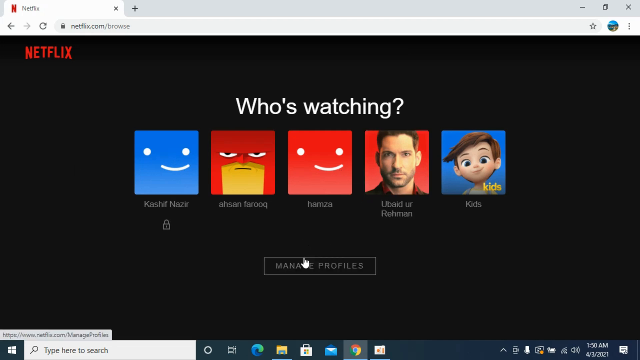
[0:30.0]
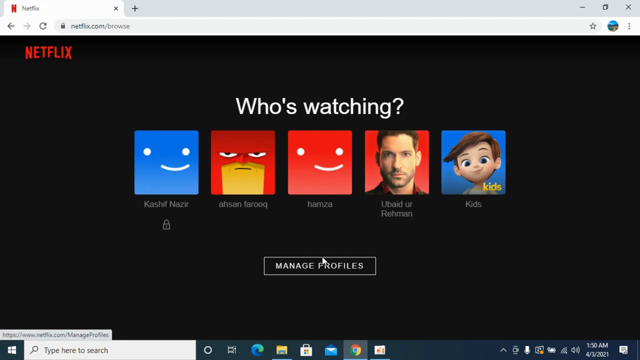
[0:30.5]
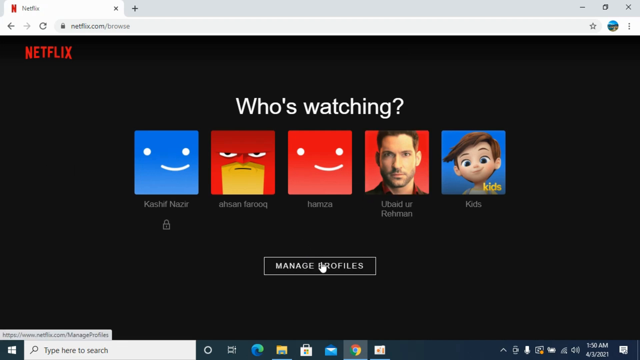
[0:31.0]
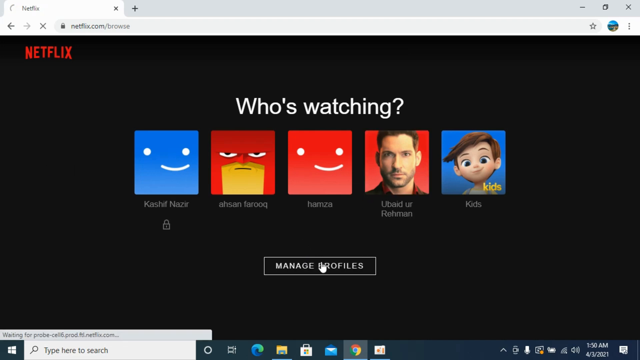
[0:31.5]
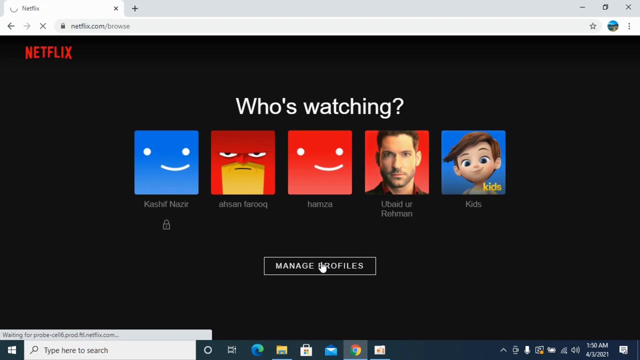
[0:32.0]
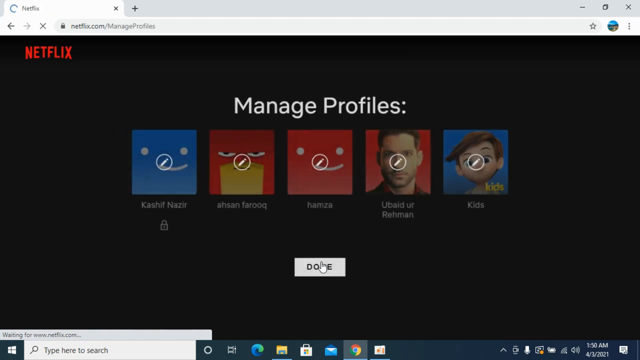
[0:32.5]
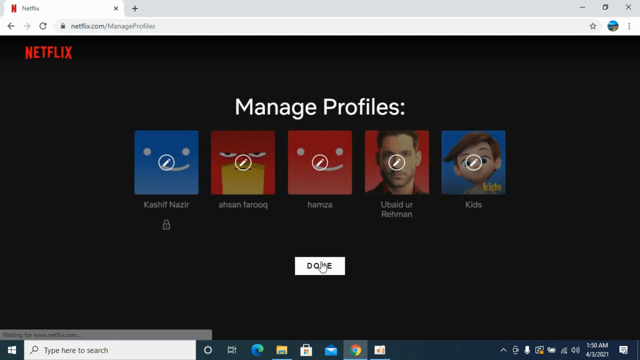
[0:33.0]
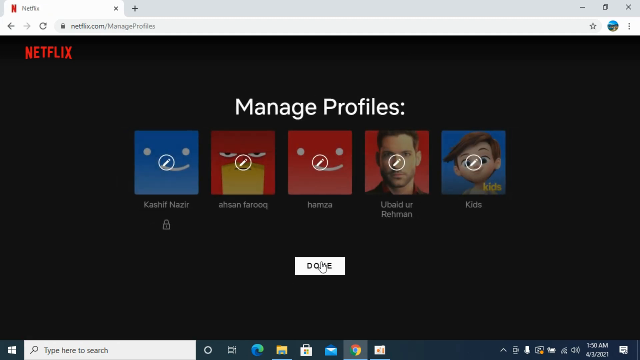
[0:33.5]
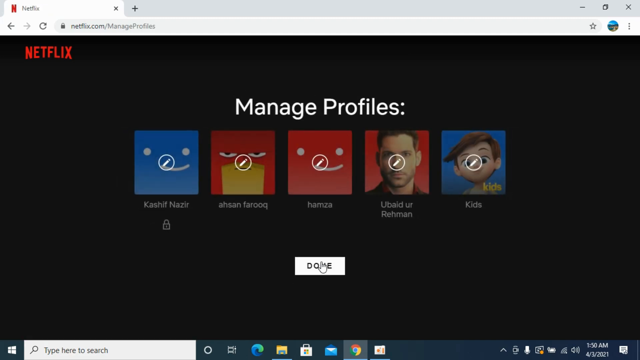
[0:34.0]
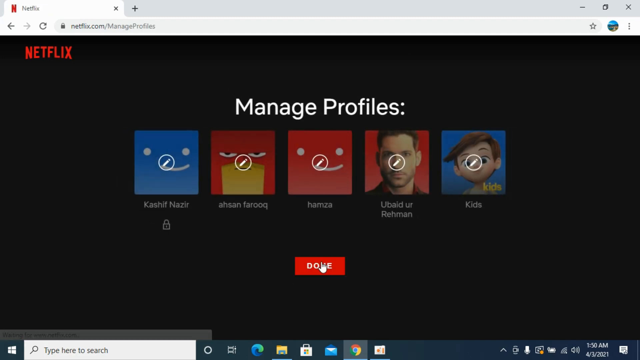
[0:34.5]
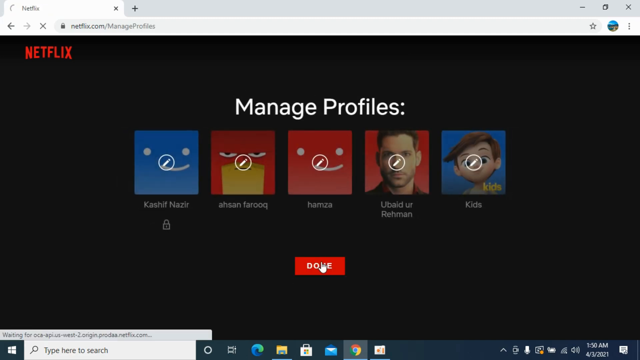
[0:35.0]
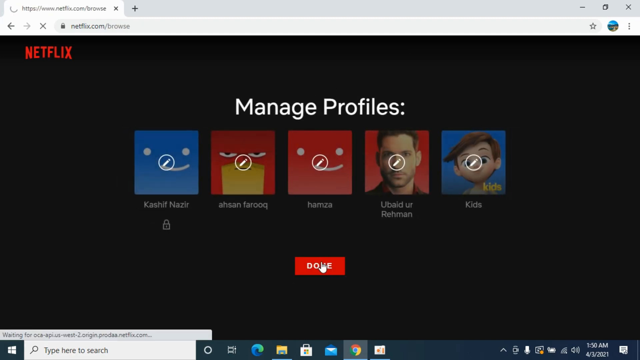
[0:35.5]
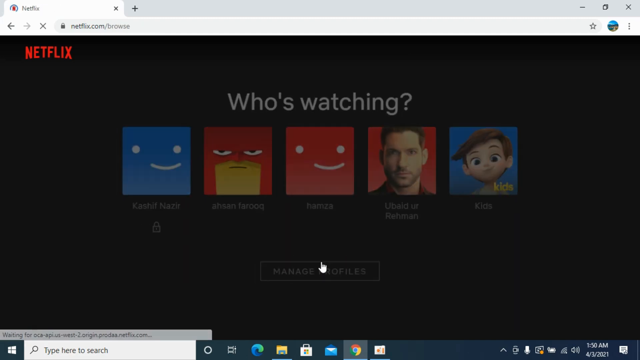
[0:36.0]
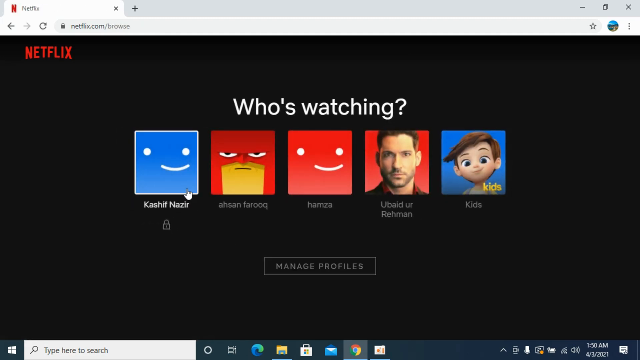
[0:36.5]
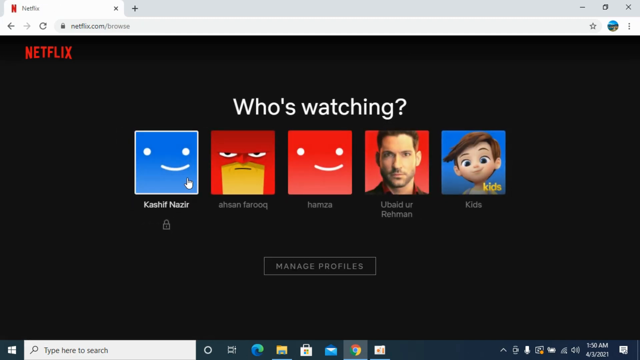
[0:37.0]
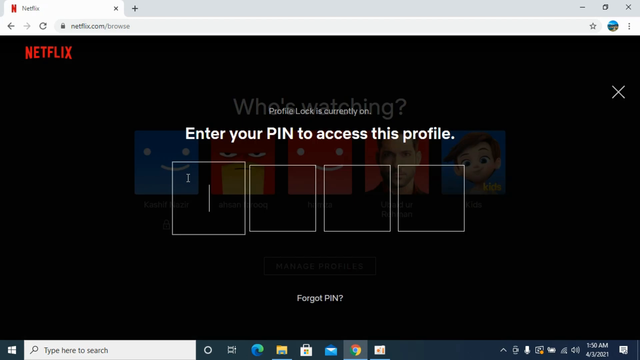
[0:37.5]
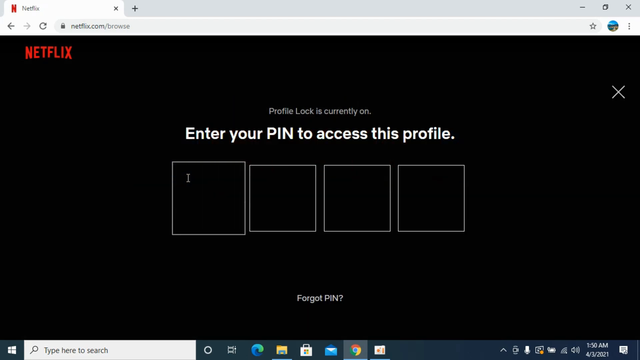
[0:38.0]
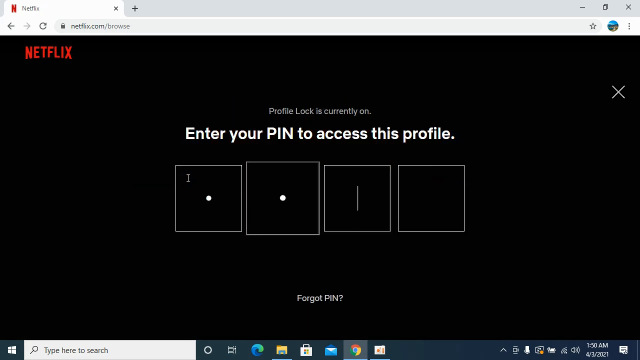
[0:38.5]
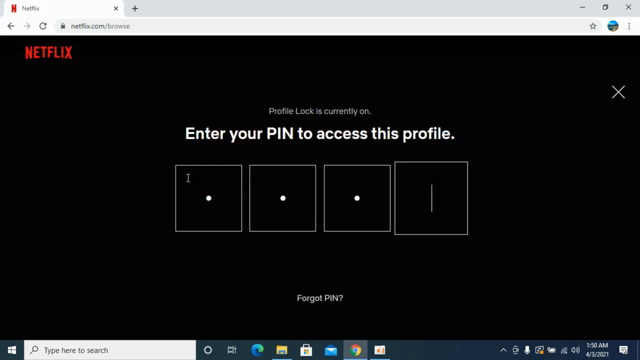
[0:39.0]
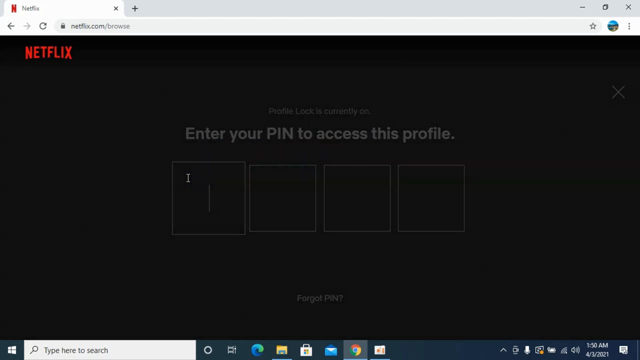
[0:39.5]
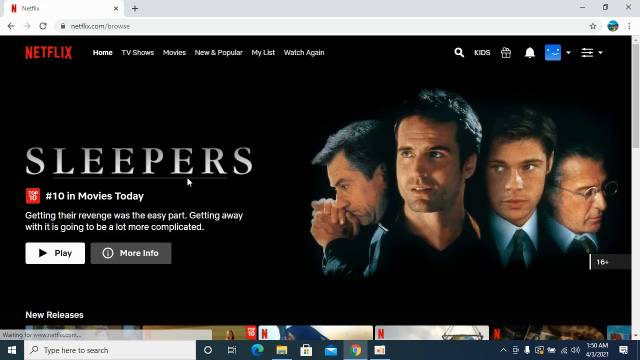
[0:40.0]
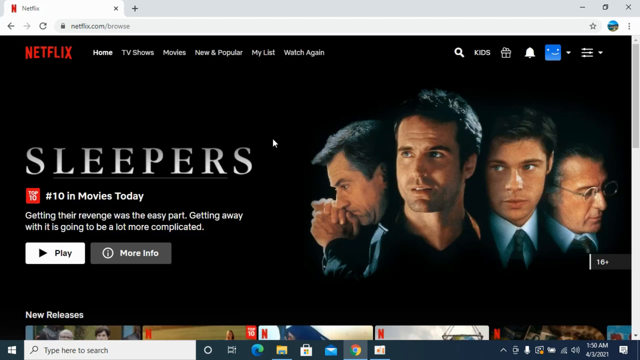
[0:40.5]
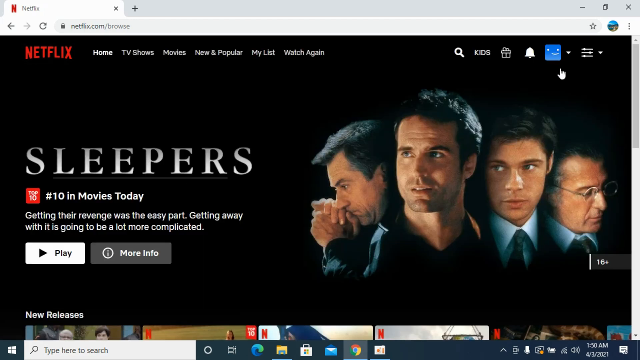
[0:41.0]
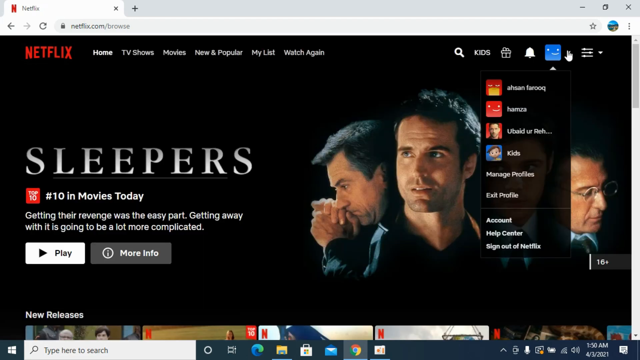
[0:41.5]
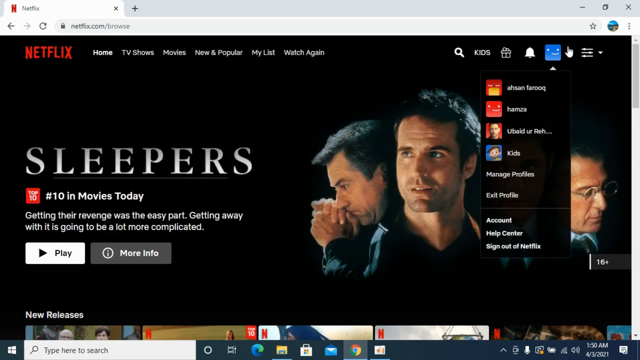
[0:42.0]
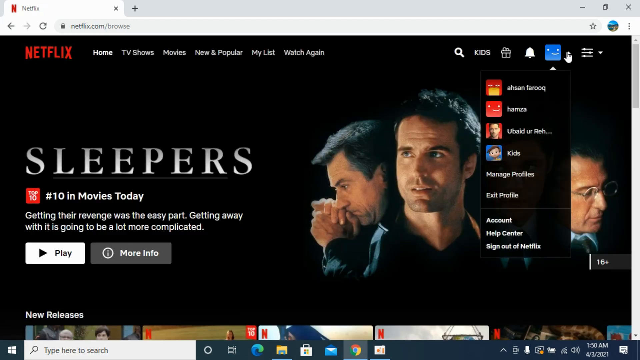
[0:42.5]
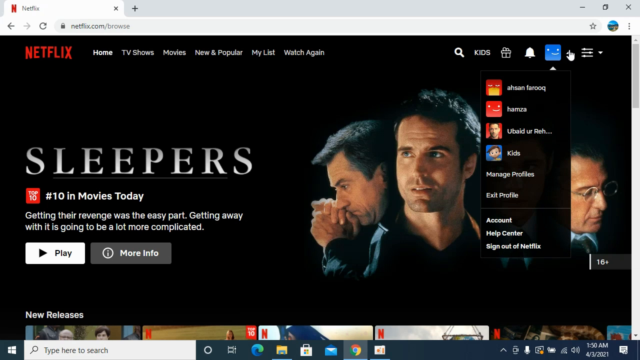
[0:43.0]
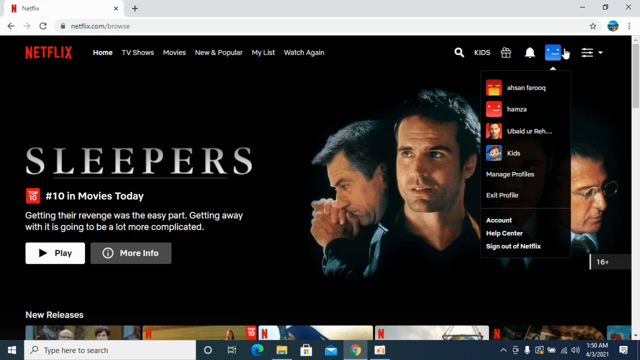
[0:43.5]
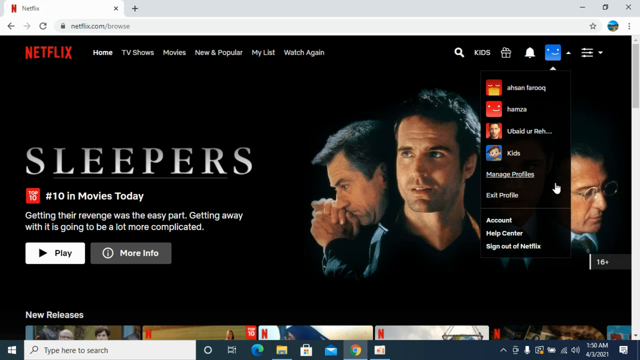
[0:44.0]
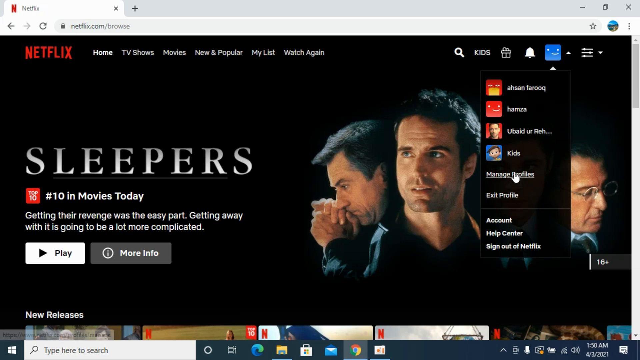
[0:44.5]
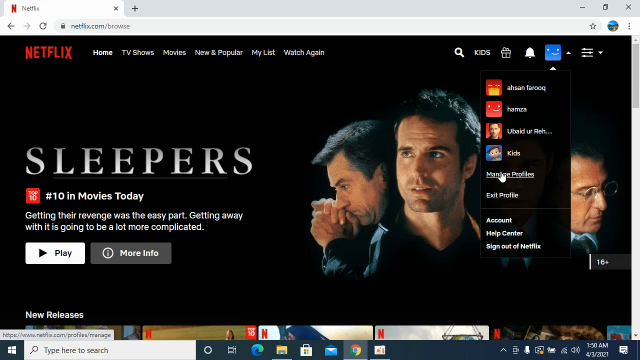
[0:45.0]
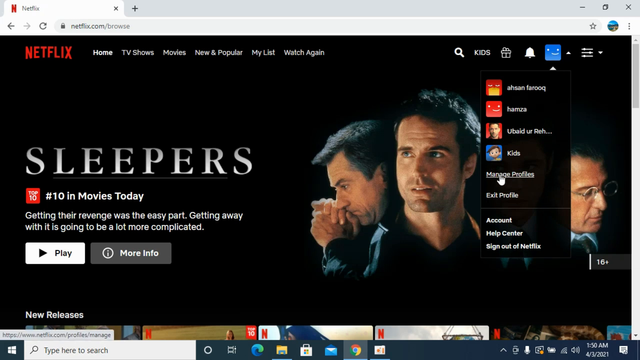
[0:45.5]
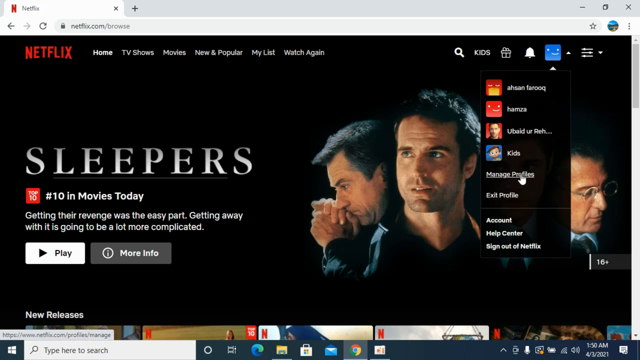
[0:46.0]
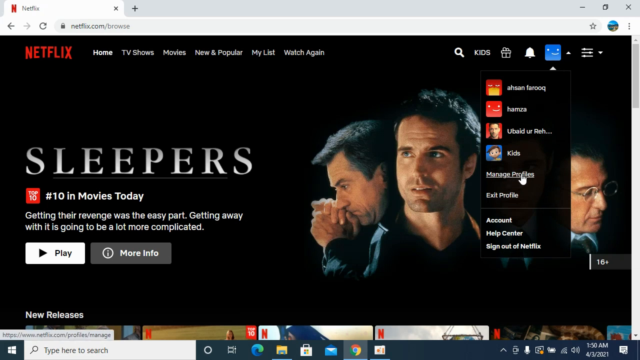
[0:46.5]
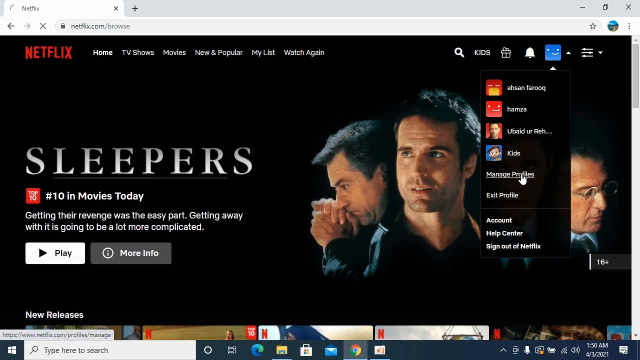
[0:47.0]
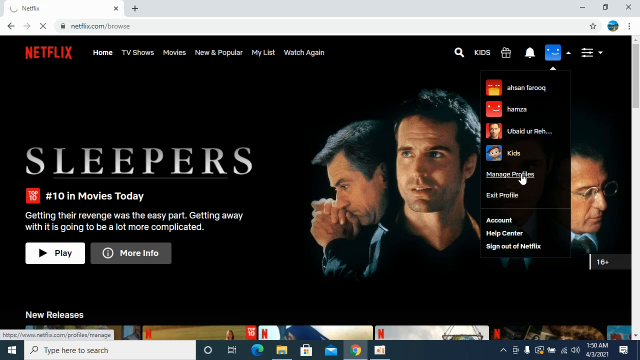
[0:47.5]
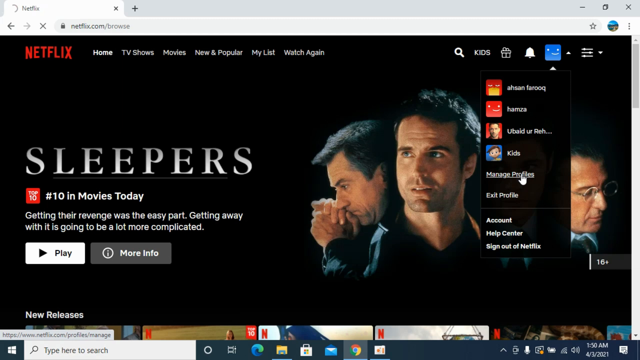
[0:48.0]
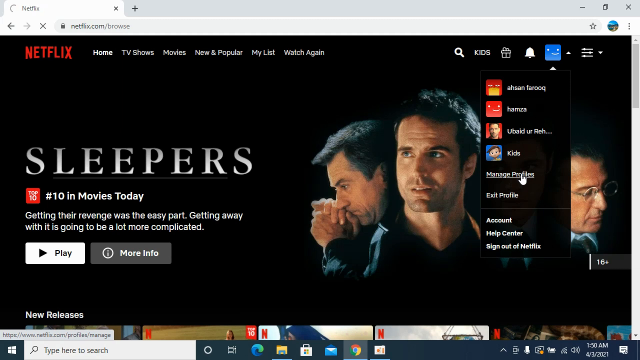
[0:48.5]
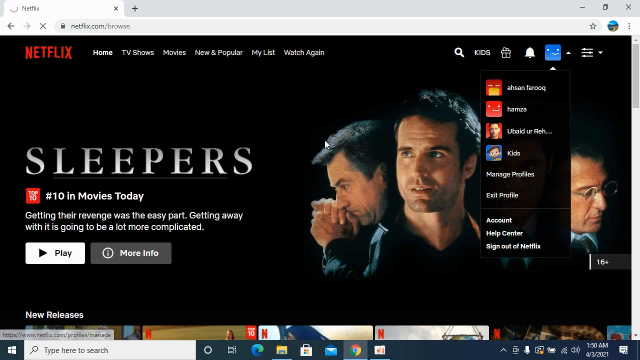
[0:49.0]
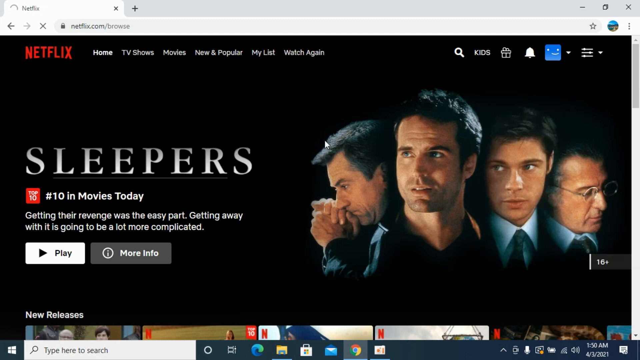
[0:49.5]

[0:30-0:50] A browser tab is open with "netflix.com/browse" in the URL. The page has a solid black background with "netflix" in red writing in the top left corner. In the center, "who's watching?" appears in large white letters, followed by a blue image of a smiley face, a red superhero, a red image of a smiley face, a picture of a man with a beard, and a picture of a little kid labeled "kids". Underneath is a tab that says "manage profiles", and the author circles his mouse very rapidly on it. It changes to "done", then the author enters his pin code. The cursor circles his account area at the top of the new page and scrolls down to where it says "manage profiles".